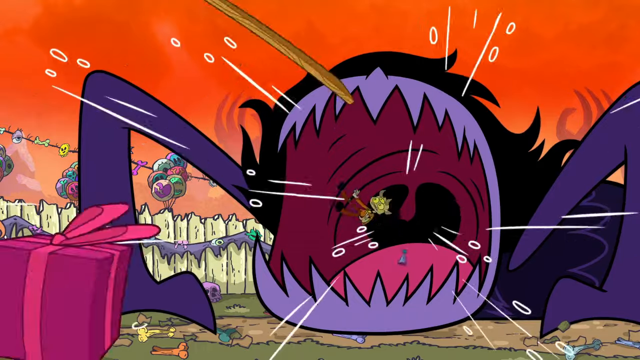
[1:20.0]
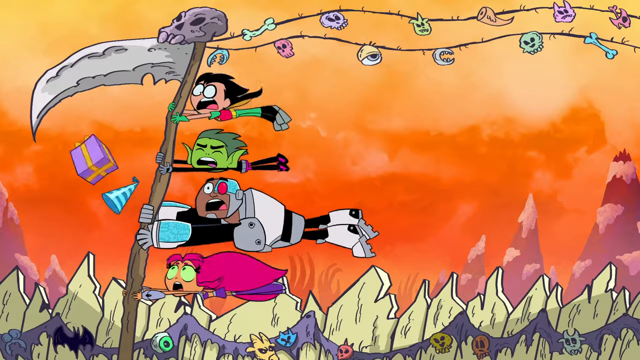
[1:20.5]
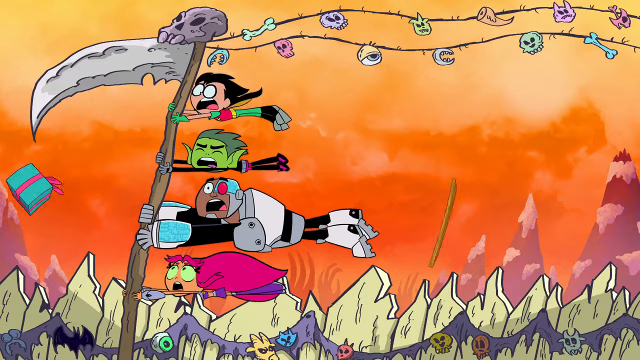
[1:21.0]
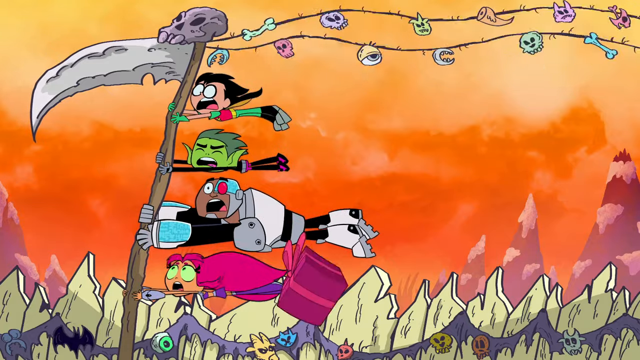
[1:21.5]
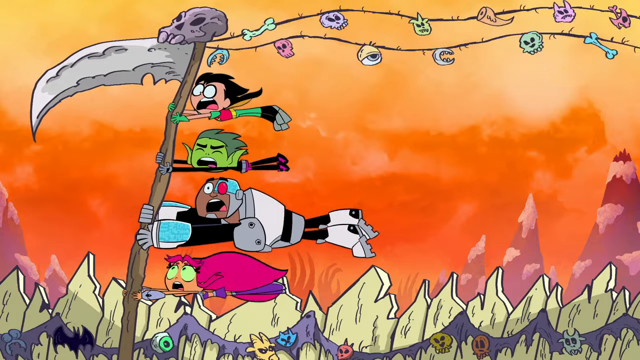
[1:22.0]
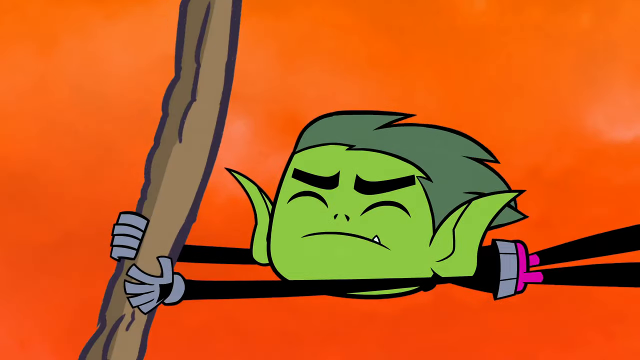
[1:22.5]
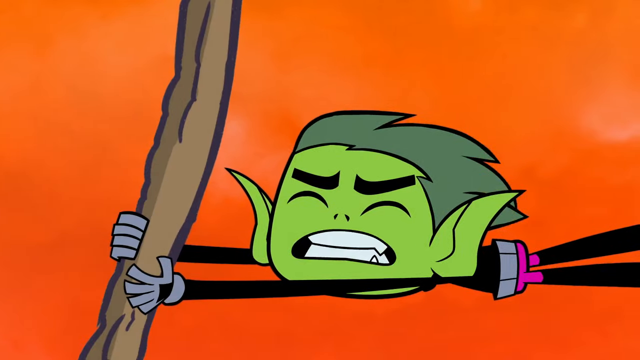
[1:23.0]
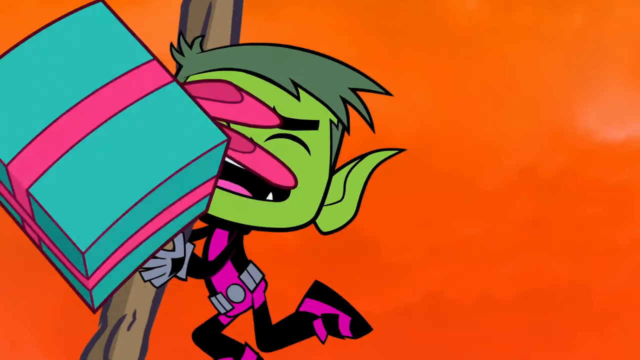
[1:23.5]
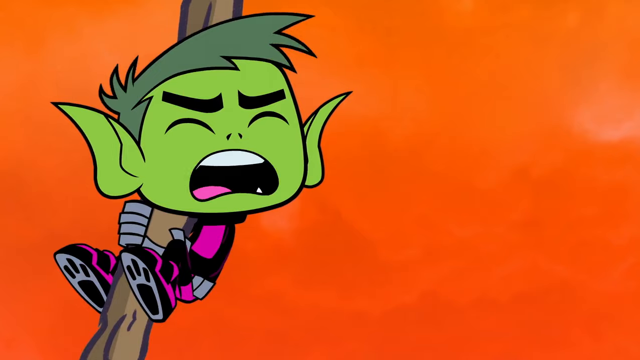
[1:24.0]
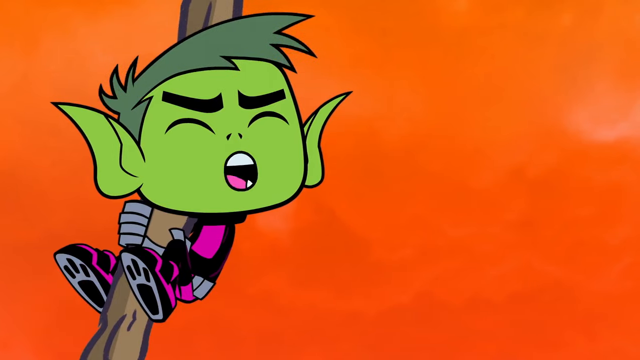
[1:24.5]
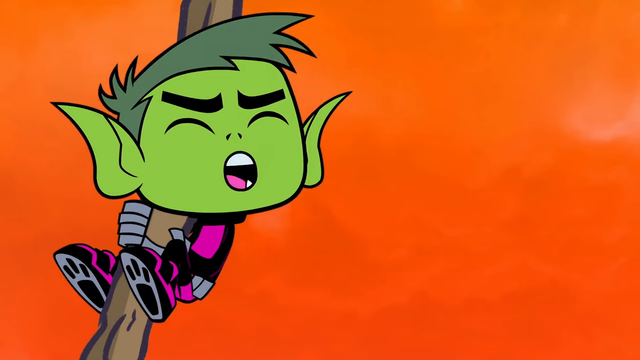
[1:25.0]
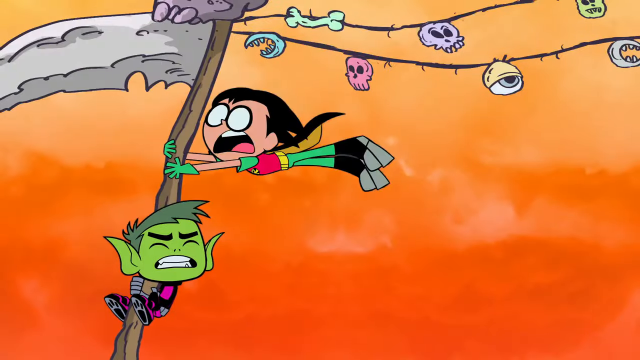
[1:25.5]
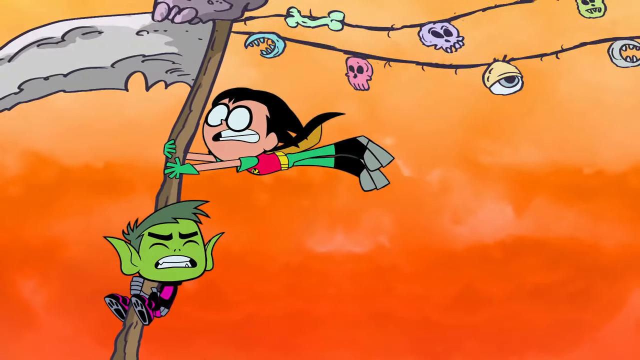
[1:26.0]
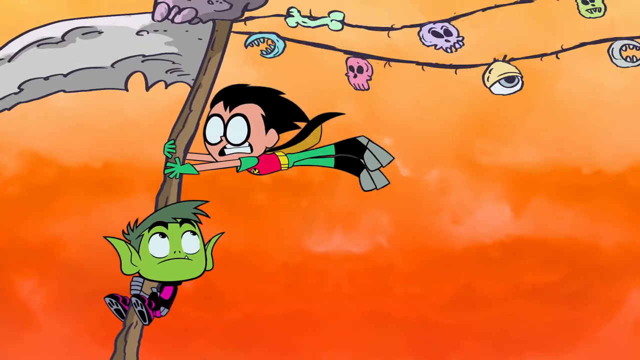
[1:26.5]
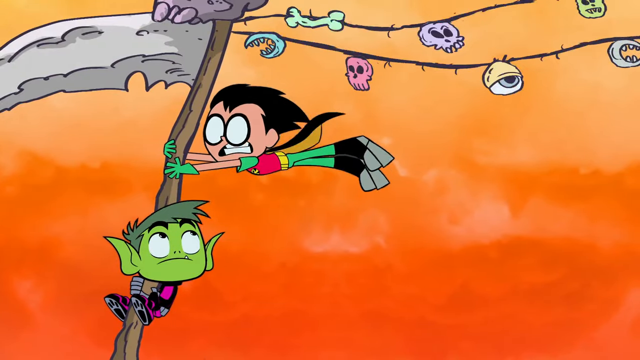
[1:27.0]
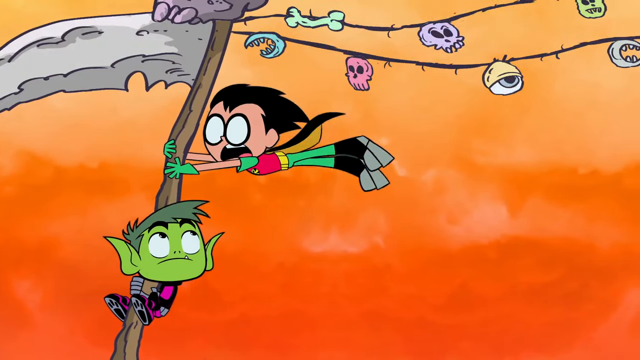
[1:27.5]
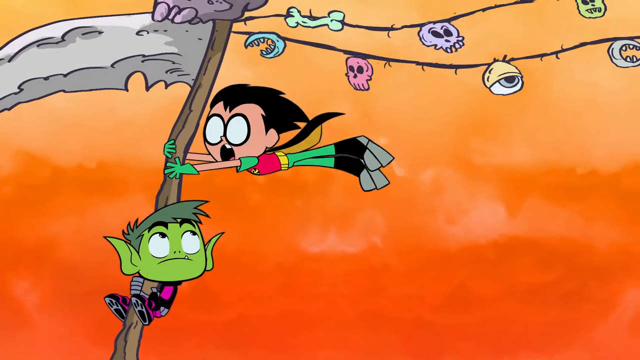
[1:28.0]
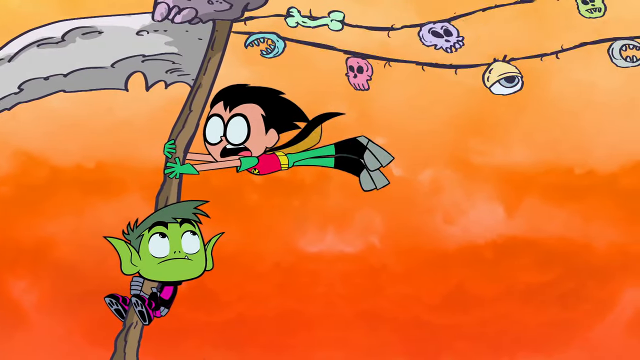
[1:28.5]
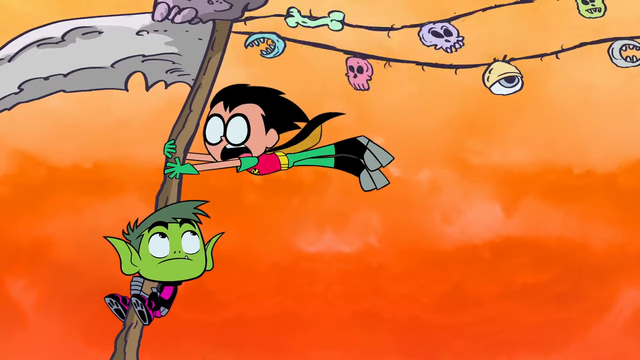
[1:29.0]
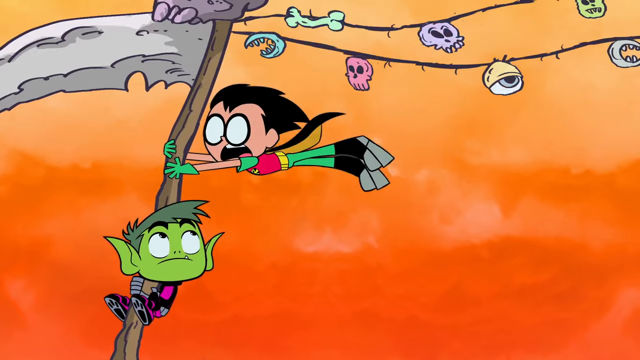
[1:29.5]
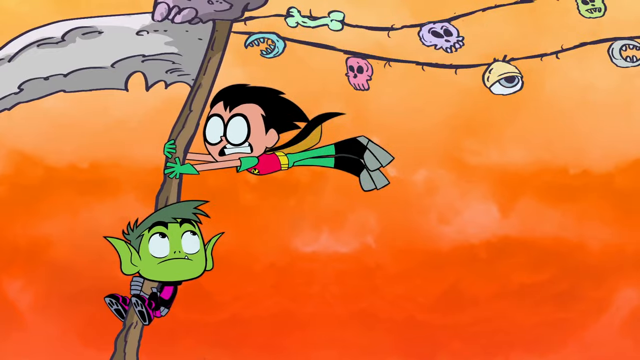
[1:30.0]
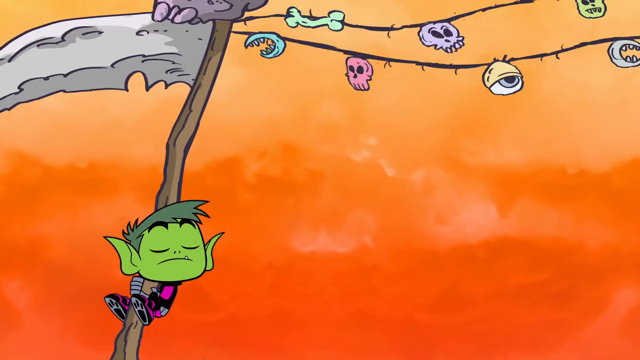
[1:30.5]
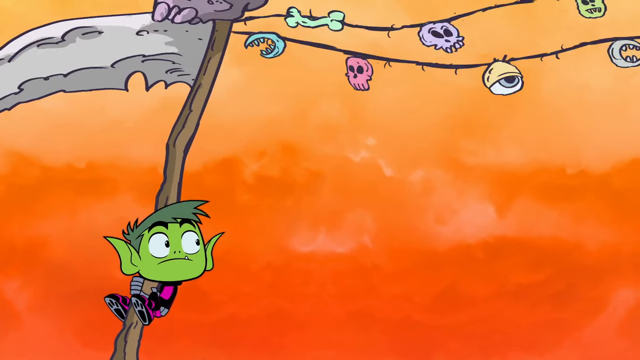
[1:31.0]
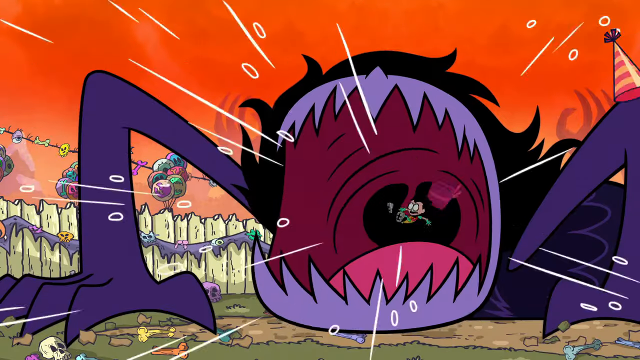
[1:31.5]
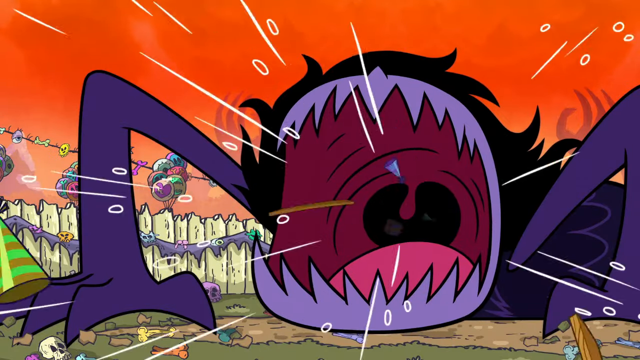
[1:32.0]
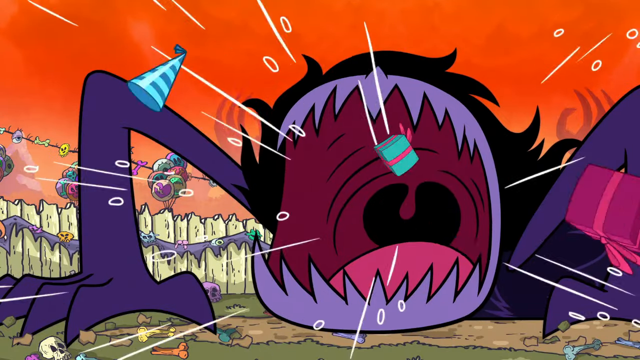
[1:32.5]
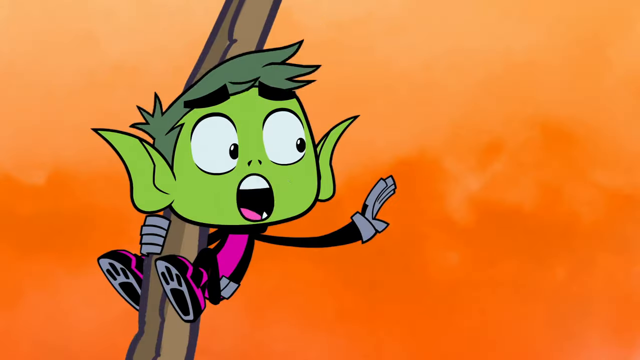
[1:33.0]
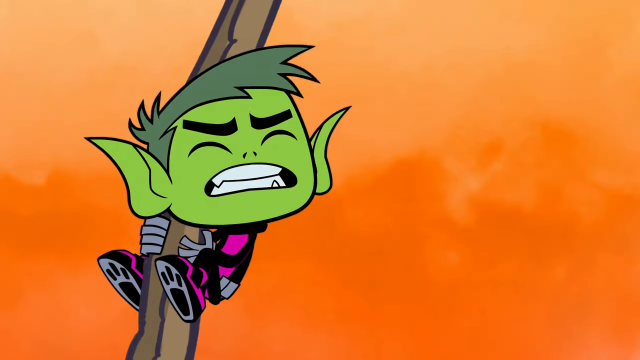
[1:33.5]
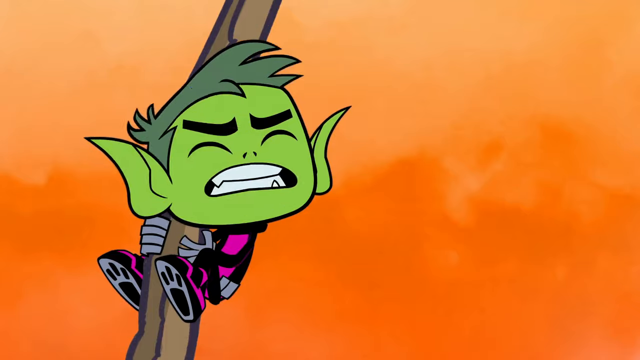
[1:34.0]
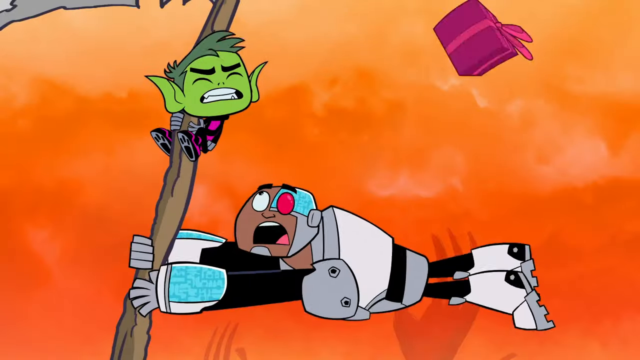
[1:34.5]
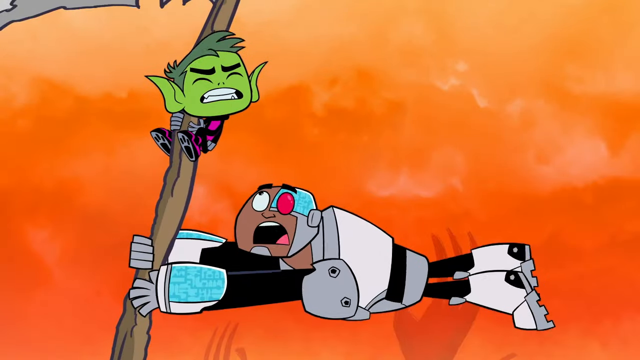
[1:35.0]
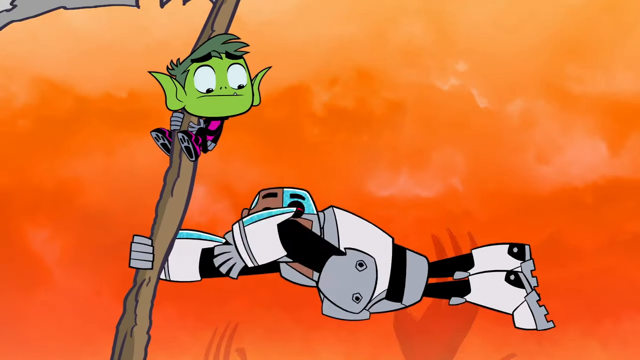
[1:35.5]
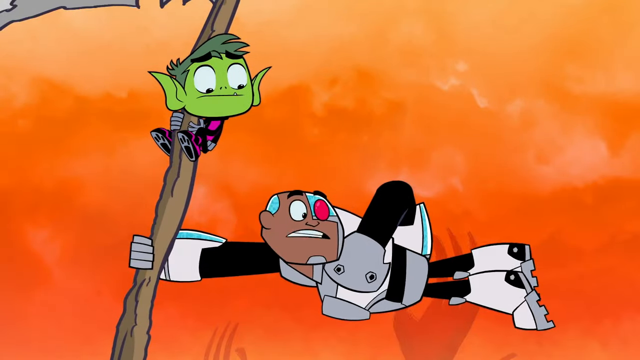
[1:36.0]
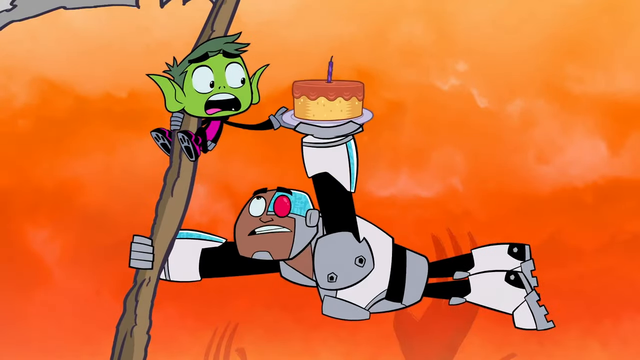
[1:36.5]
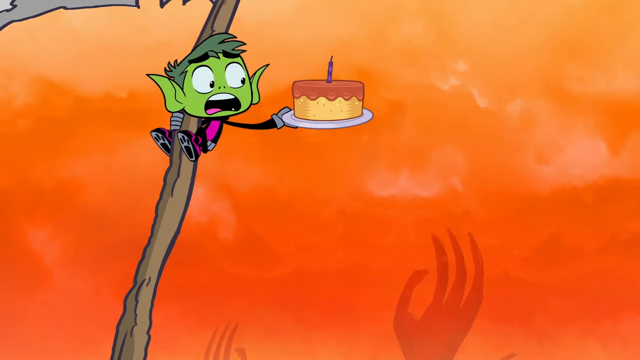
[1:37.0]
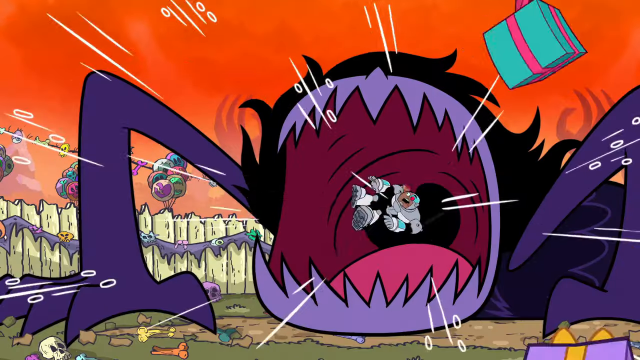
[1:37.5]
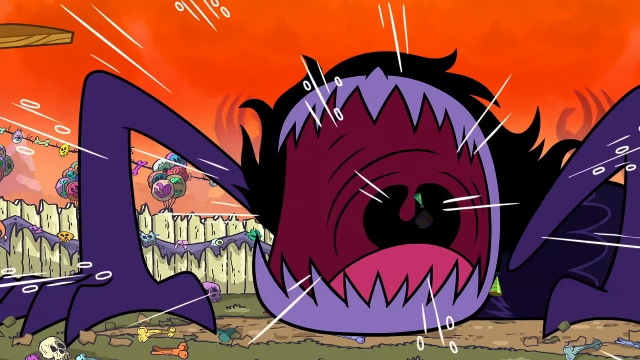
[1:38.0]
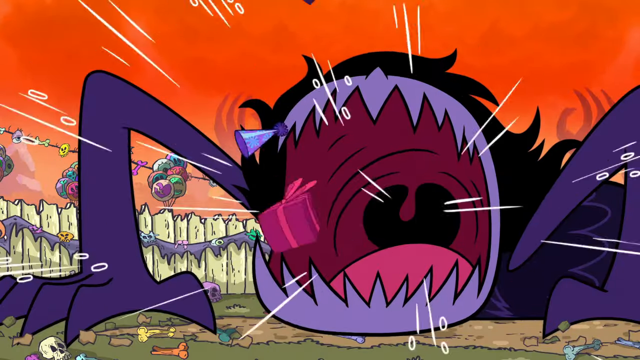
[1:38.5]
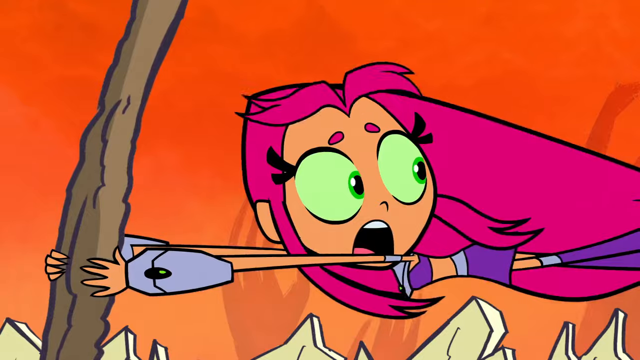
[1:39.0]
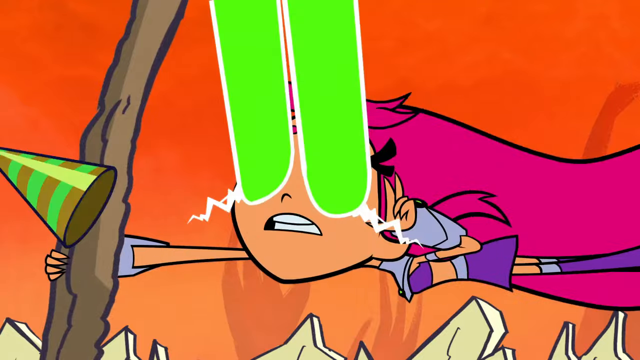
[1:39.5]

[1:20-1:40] The worm-like monster has its mouth wide open, showing the tonsils and tongue, and acts like a vacuum, sucking in presents, people and anything else. The original friends who look like Robin, the green goblin, the cyborg and the flying girl hold on to something wooden with a skull at the top, with flags coming out of it and evil things like skulls and eyeballs hanging on. They hold on for dear life as everything around them is sucked in. The green goblin says a lot to Robin, Robin says something back, then loses his grip and is dragged into the monster's mouth. The green goblin looks like he may be saying bye while holding on, then talks to the cyborg, who gives him a cake and then is sucked into the mouth. The girl with pink hair and a blue and purple outfit who can fly then activates something in her eyes: green, laser-like beams that go up toward the green goblin, who is holding the cake. Everything is very bright, with a lot going on.